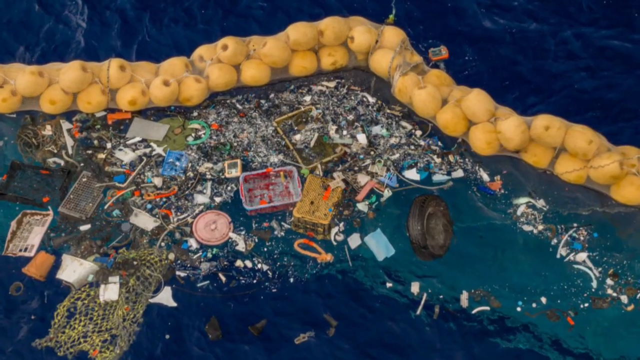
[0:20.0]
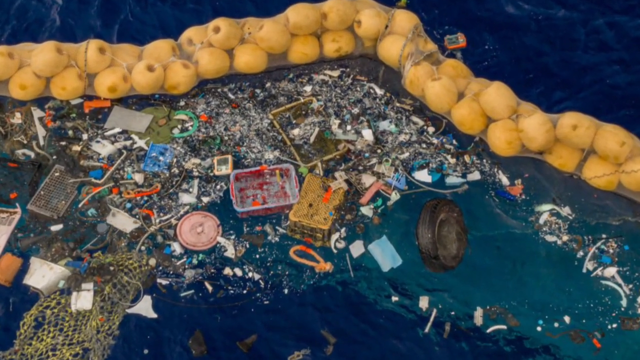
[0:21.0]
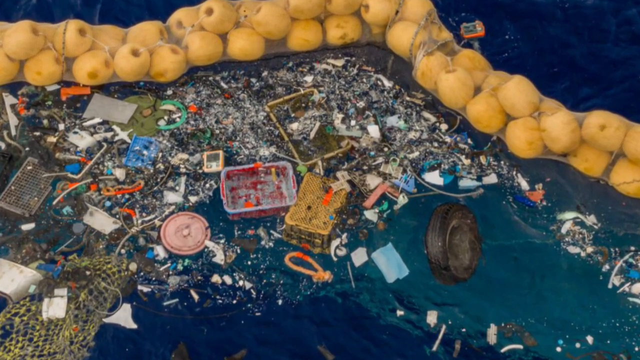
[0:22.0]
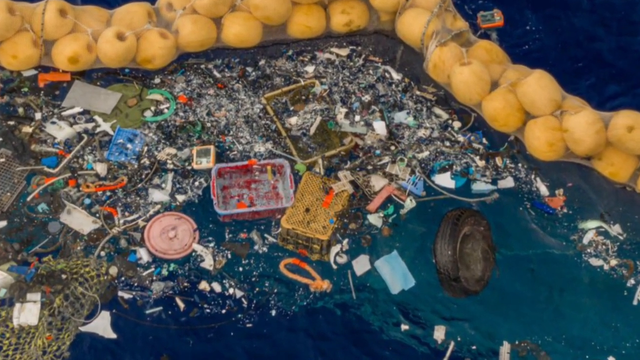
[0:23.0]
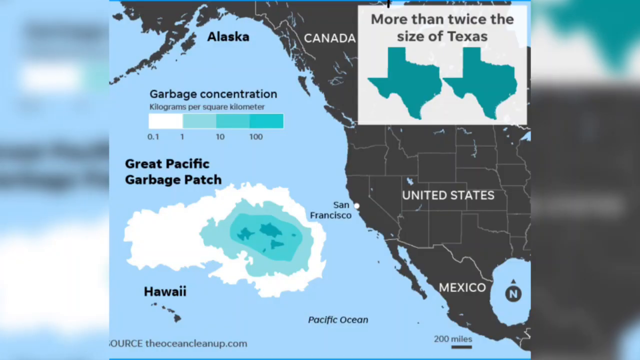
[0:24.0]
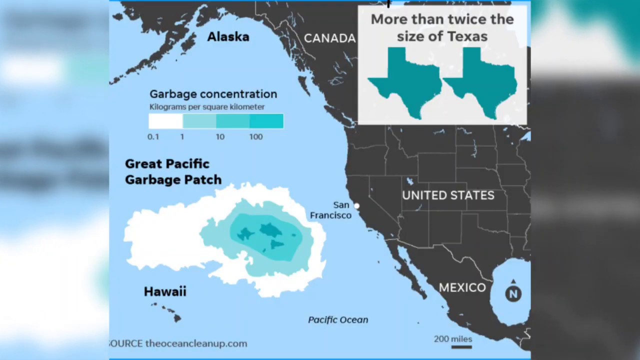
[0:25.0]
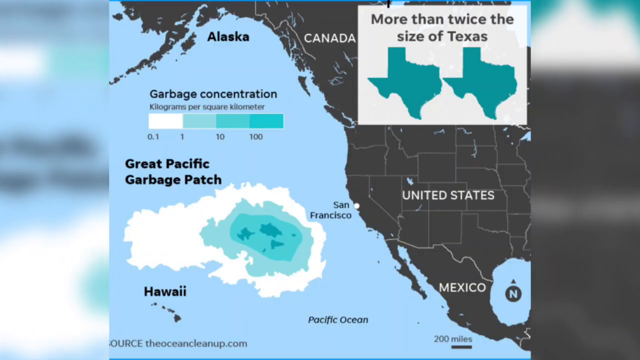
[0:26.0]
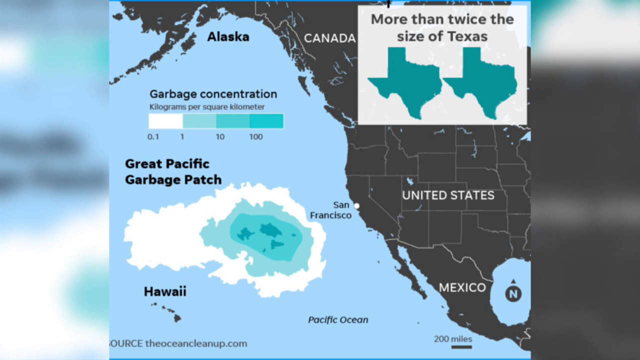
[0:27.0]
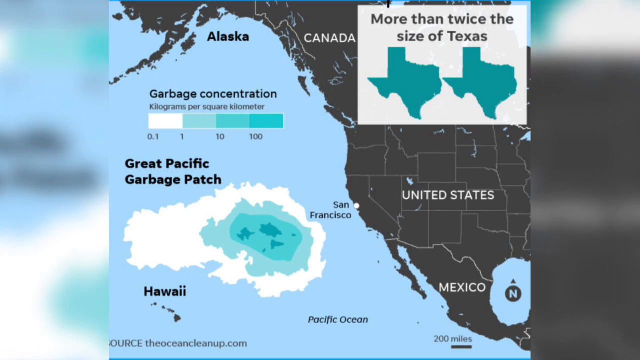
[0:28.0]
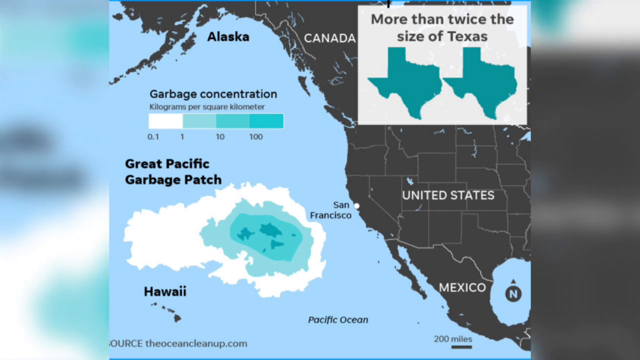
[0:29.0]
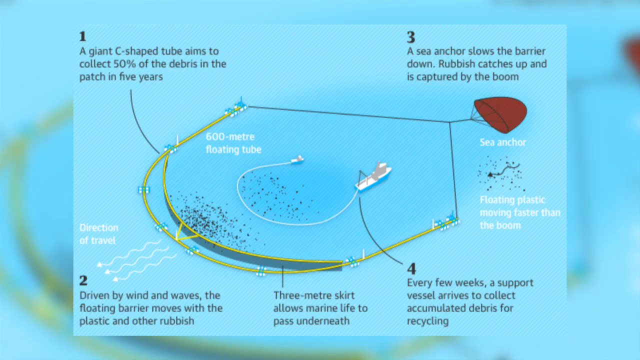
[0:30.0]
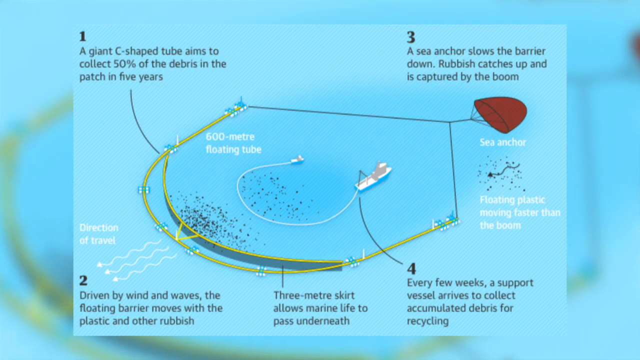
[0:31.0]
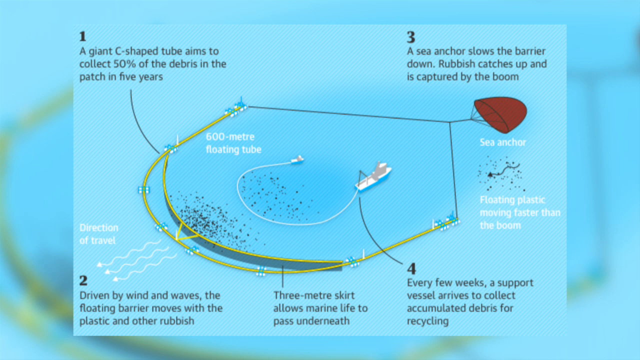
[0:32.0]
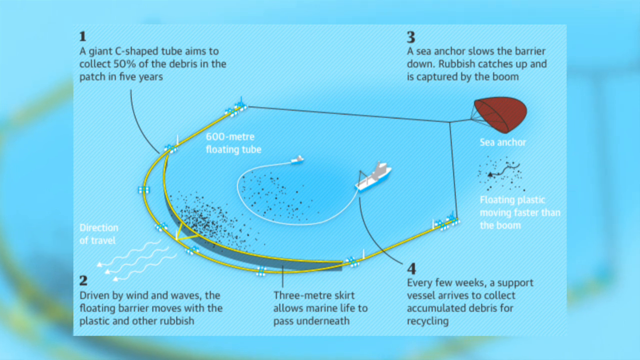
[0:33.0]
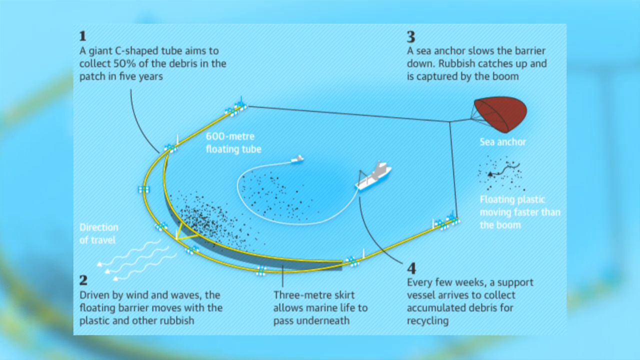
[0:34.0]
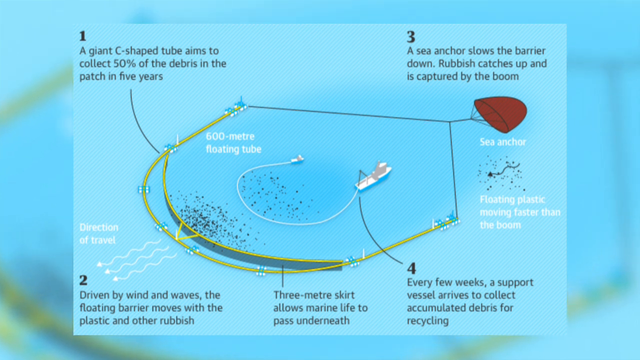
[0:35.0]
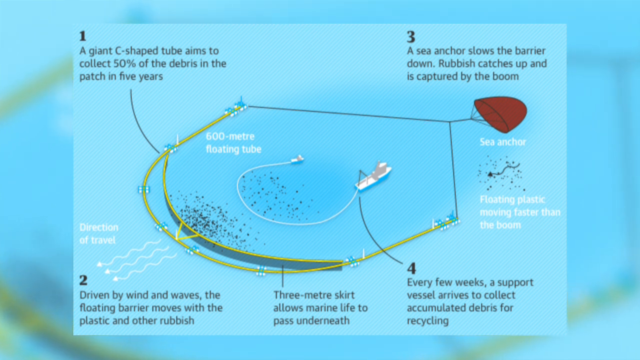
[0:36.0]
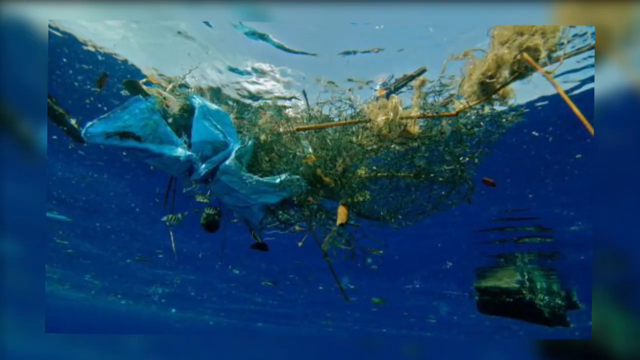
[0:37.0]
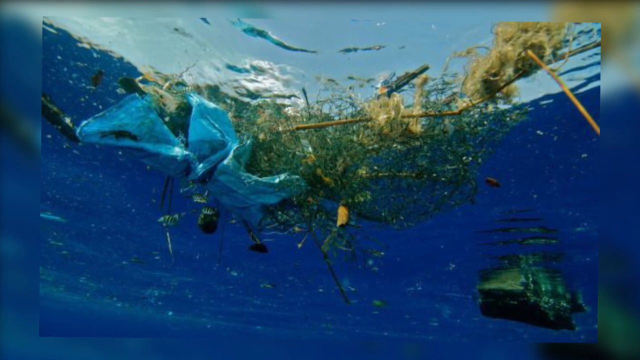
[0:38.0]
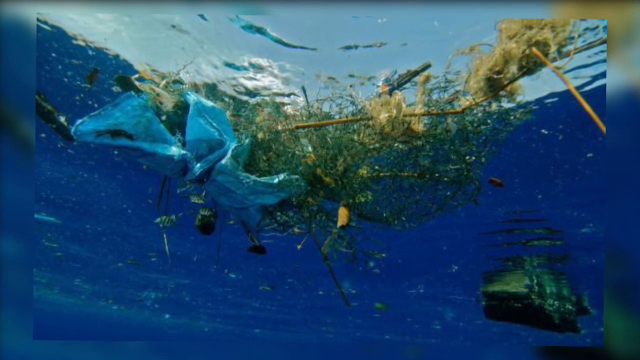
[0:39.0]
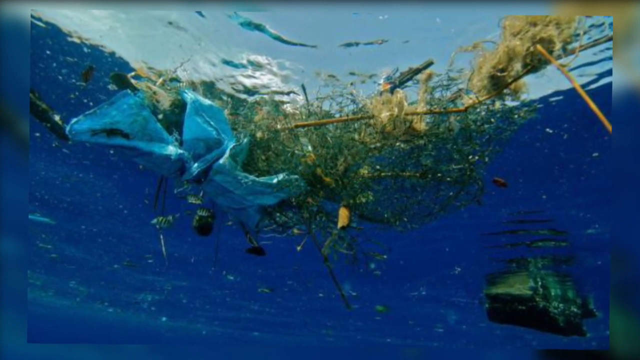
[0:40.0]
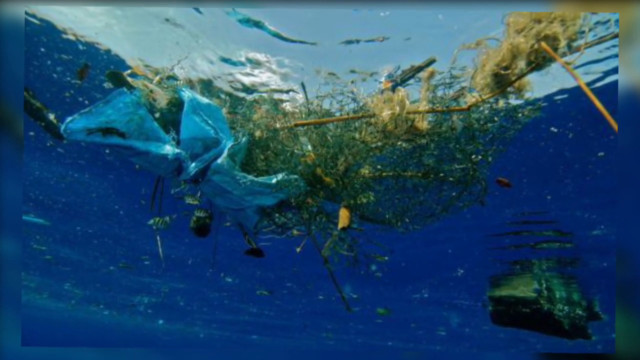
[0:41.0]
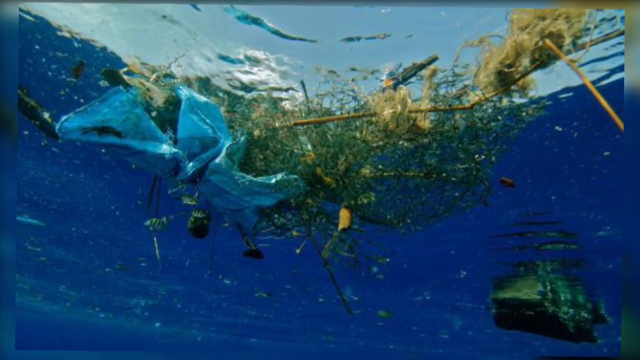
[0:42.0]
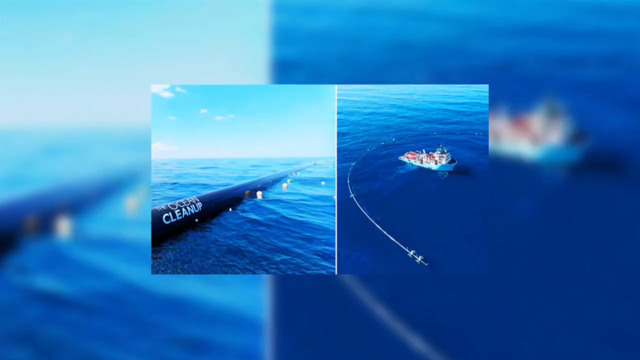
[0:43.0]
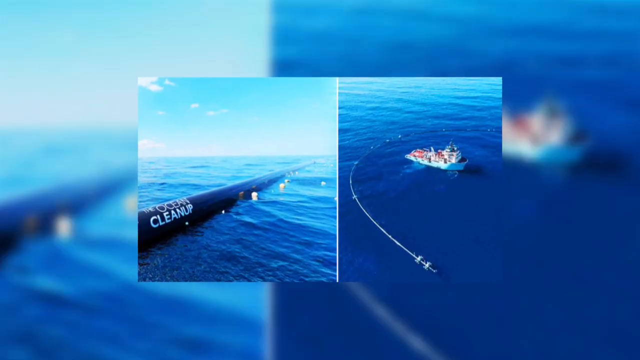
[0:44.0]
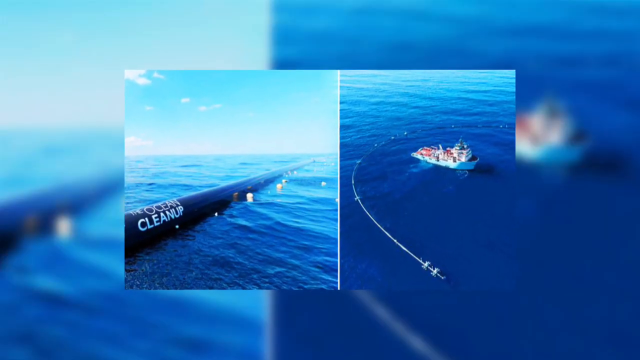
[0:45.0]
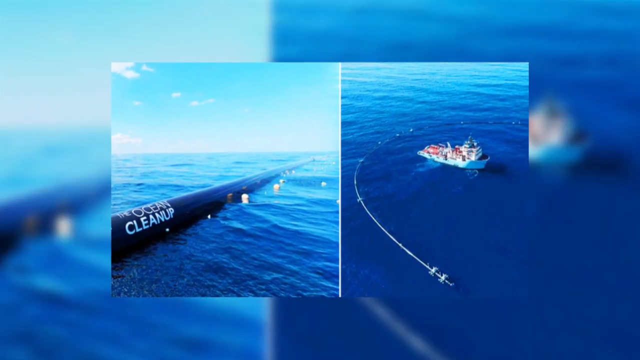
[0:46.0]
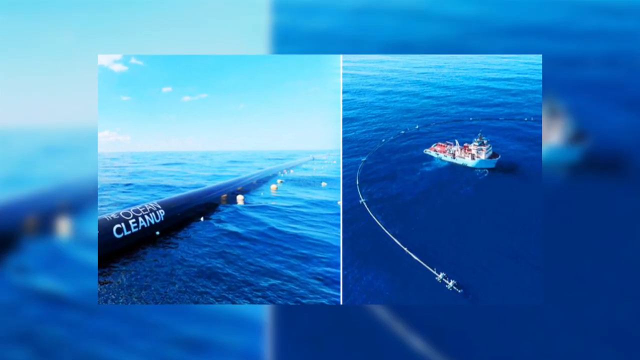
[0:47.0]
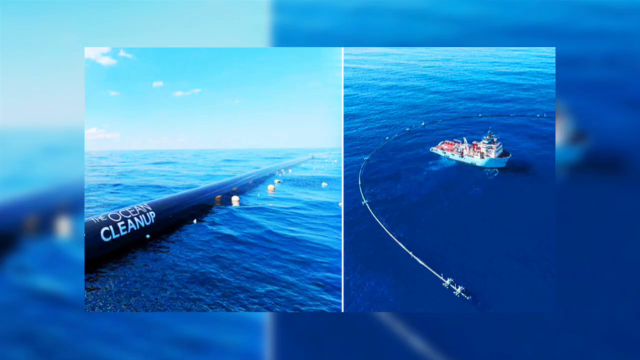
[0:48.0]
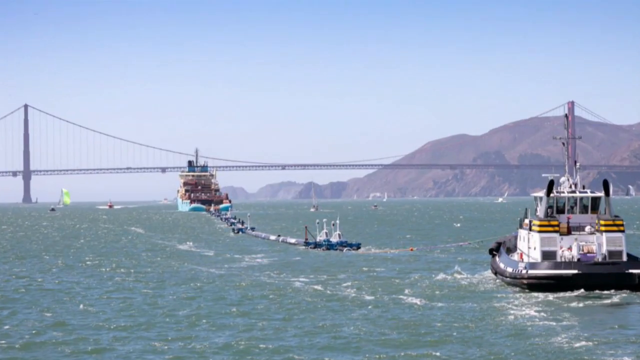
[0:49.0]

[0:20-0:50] Junk and debris that has accumulated in the ocean floats in the water. There is a black rubber car tire. Toward the lower left corner of the screen is a pink rectangular box that looks square, and there appears to be a peach-colored lid to a pot. Ocean waves crash all around the debris. The water in the foreground appears more turquoise, while the water toward the background appears more of a deep royal blue. The camera draws in for a closer look at the debris floating in the water. Next, a map shows Alaska, Canada, the United States, San Francisco, Mexico, the Pacific Ocean and Hawaii. The land on the map is gray and the water is powder blue.